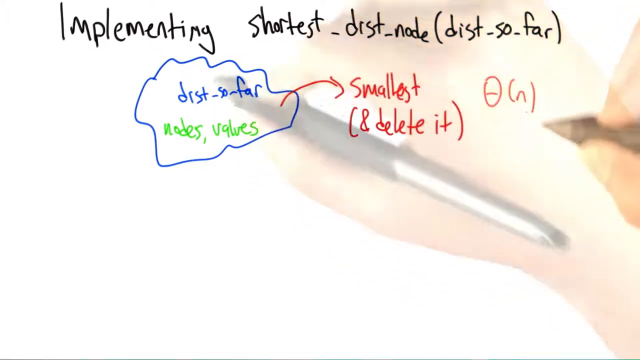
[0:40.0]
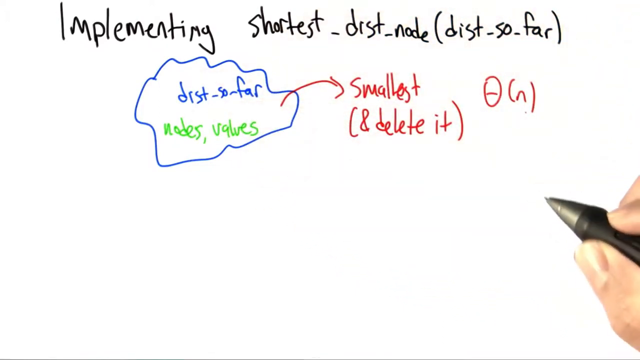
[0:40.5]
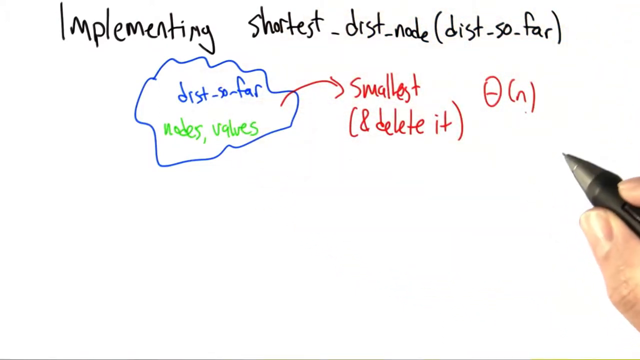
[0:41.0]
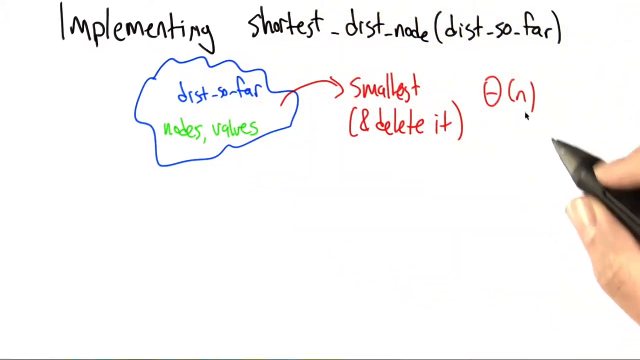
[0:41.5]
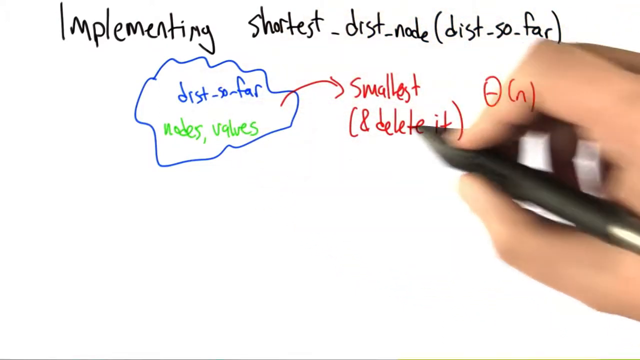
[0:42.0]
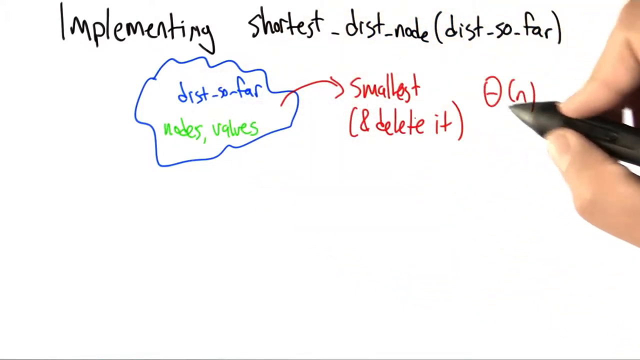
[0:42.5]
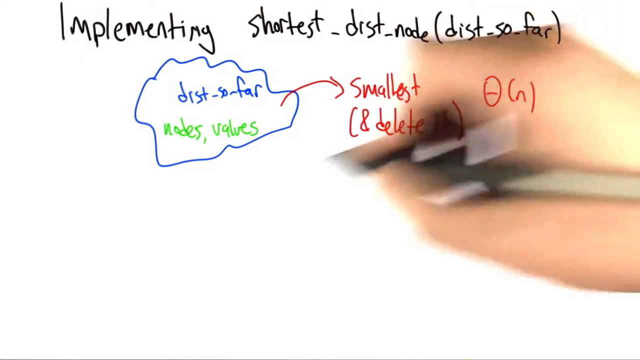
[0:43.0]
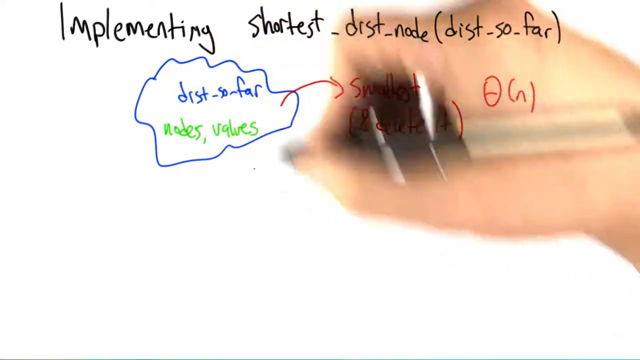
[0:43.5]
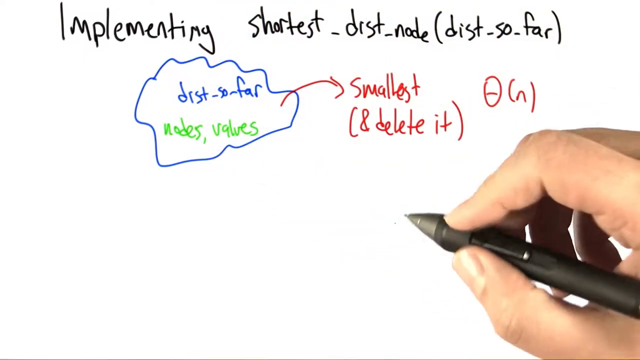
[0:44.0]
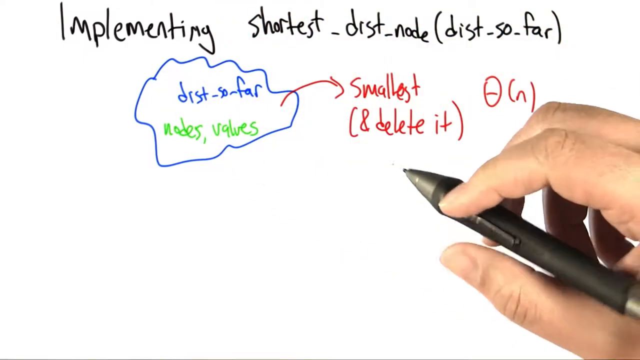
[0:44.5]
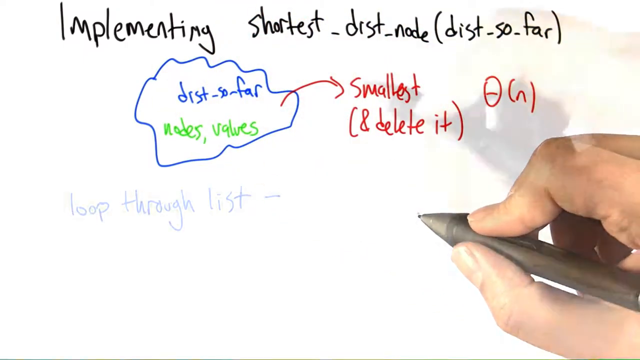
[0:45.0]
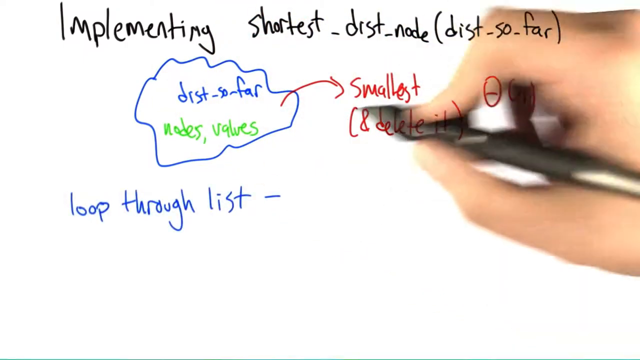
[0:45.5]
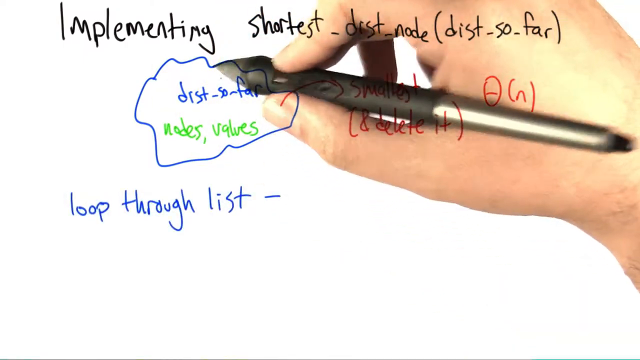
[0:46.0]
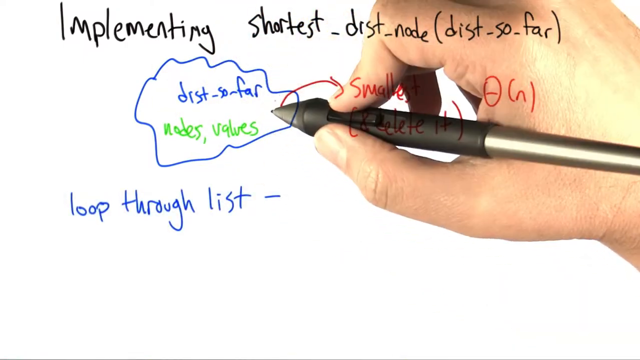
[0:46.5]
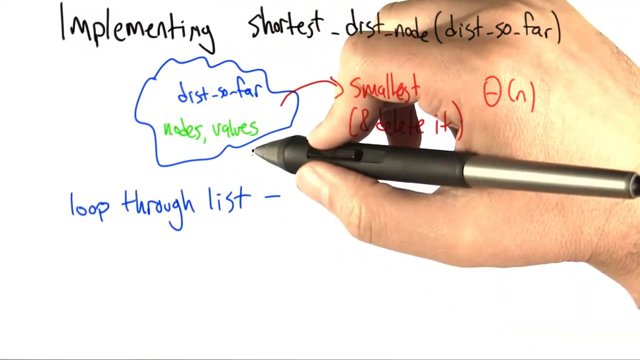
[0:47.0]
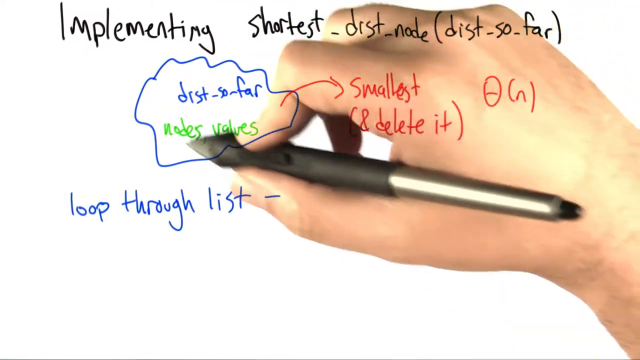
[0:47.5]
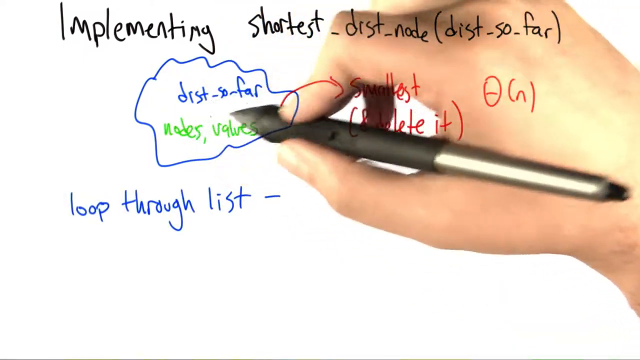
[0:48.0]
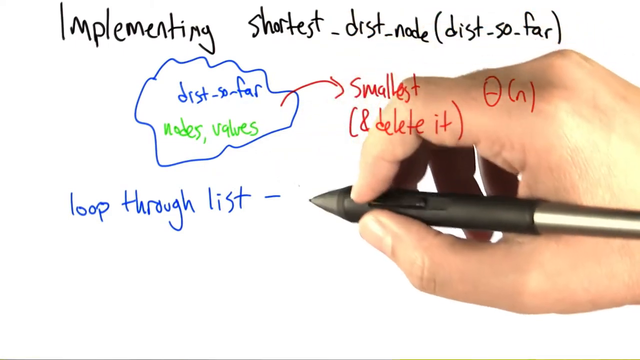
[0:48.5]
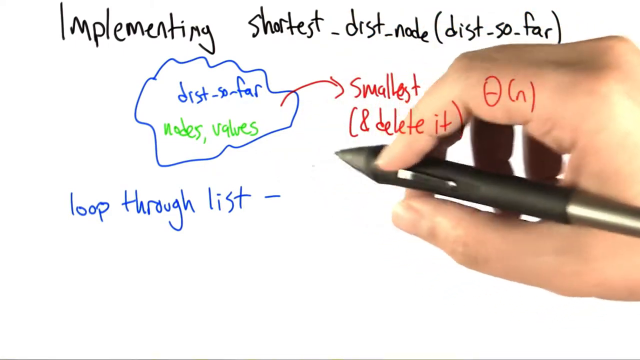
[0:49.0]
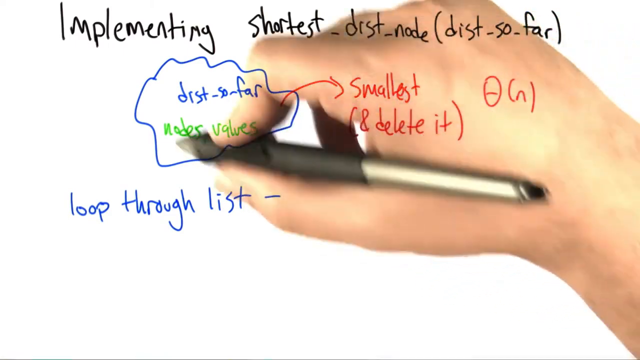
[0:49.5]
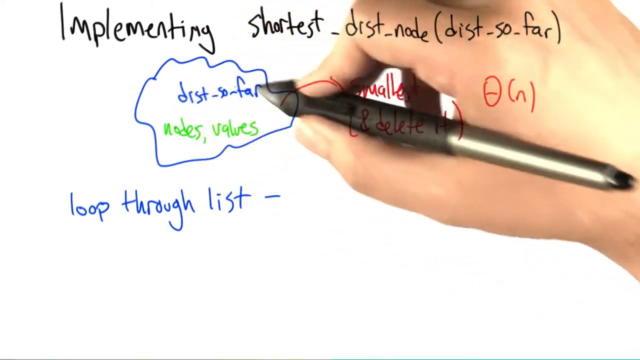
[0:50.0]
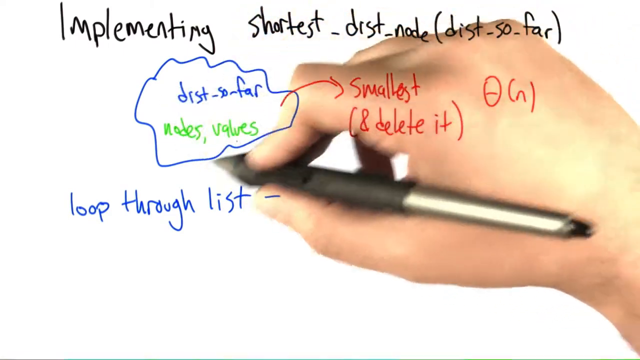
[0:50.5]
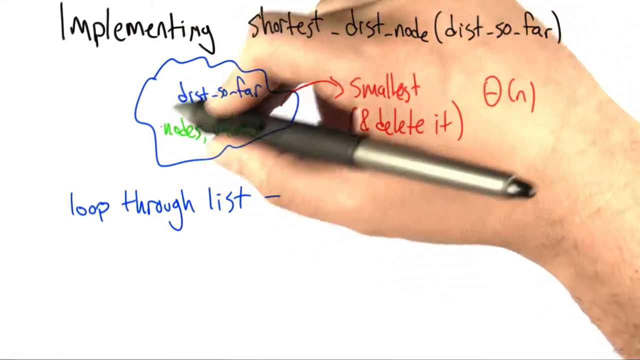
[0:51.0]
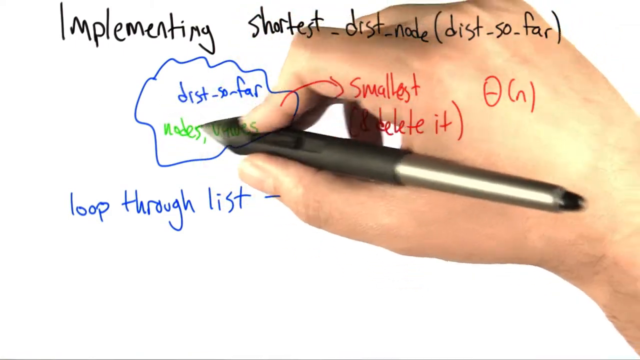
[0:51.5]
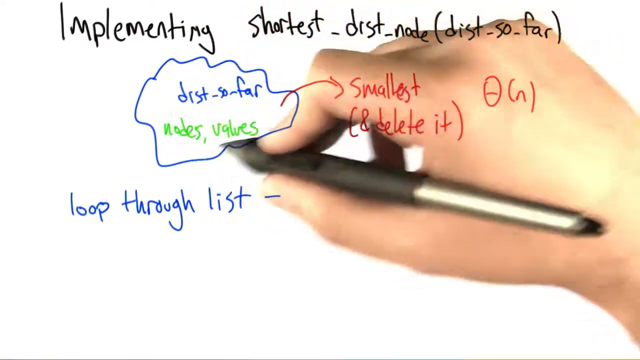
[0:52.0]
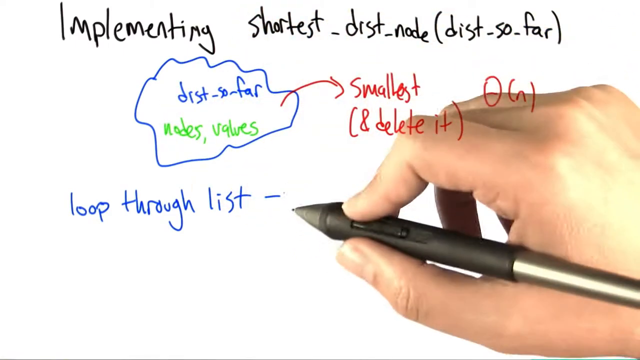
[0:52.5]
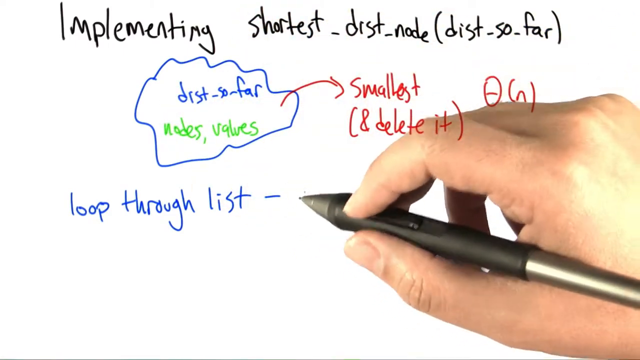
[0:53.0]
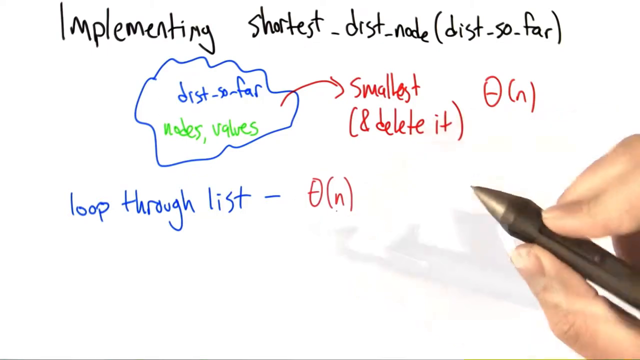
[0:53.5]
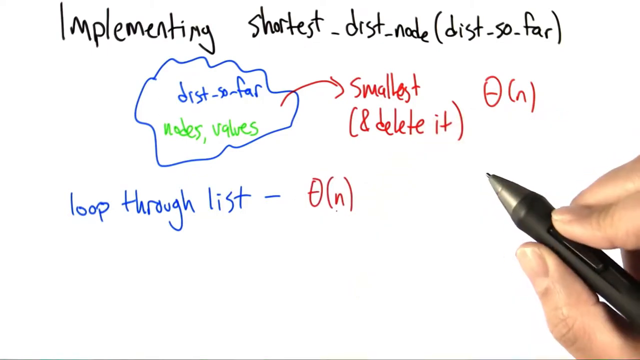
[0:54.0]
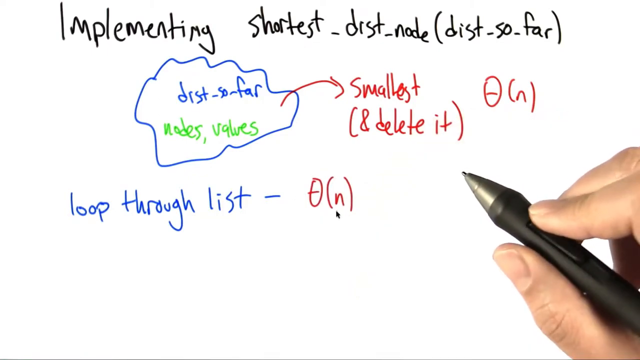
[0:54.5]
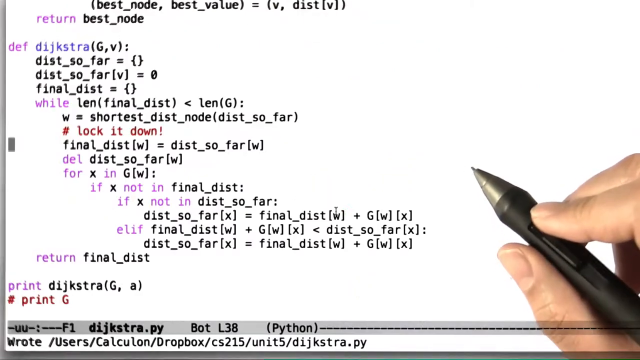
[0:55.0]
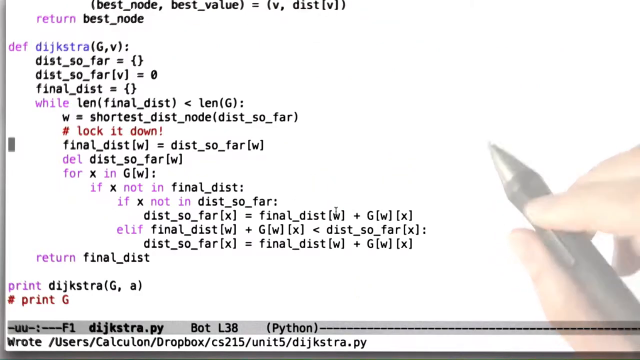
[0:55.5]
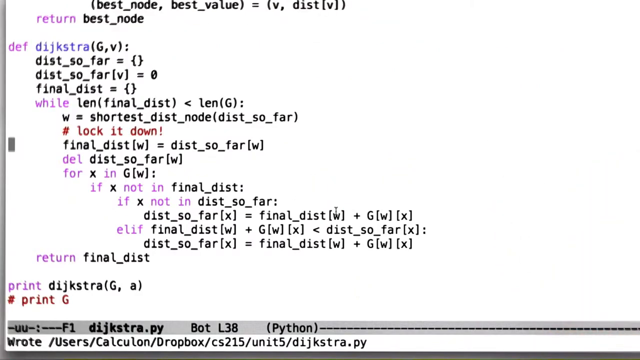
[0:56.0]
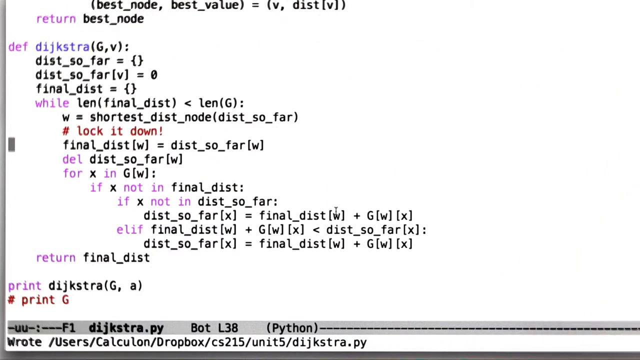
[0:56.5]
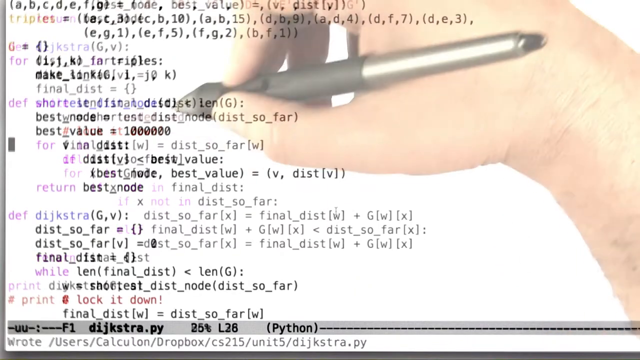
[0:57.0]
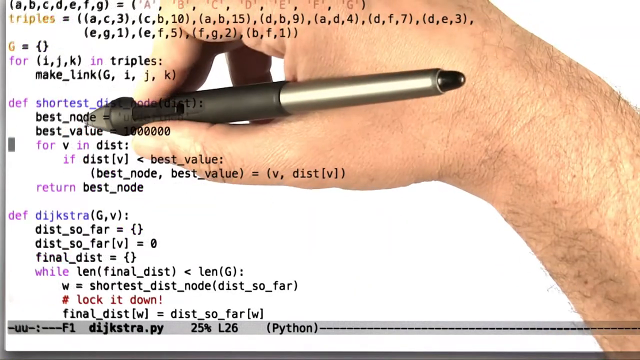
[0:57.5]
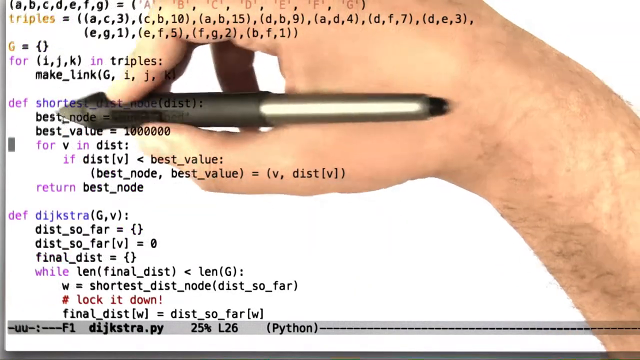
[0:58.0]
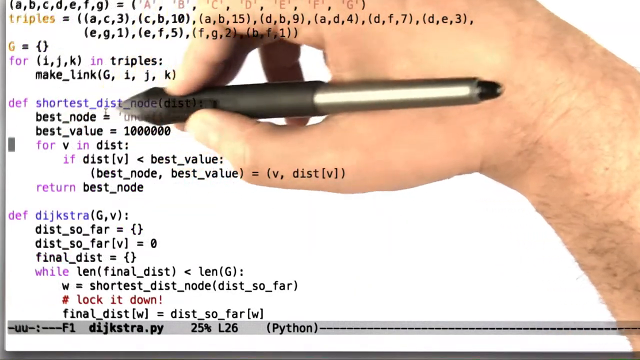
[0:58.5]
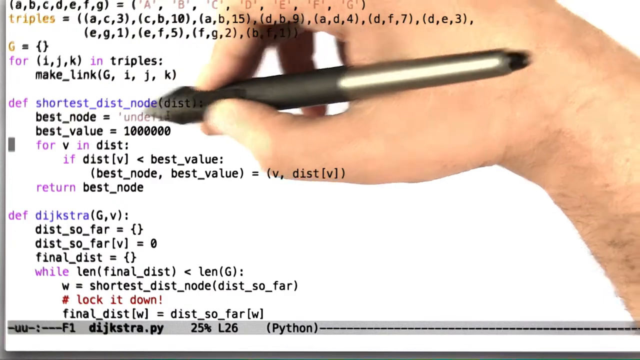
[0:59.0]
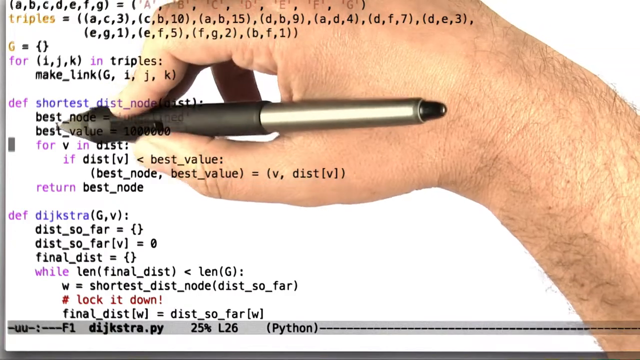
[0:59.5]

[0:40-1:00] The person's hand is visible holding the pen used to write on the whiteboard. Red text has been written over to the right, and they wave their hand around the screen, pointing out different areas where different words are written, then circle their hand and the pen tip around the blue squiggly line with text in it. Next, code they apparently created is shown on a blank notepad with no title or ending. The code begins at the top, its lines are not numbered, and there is one large block of code in the very center of the notepad.